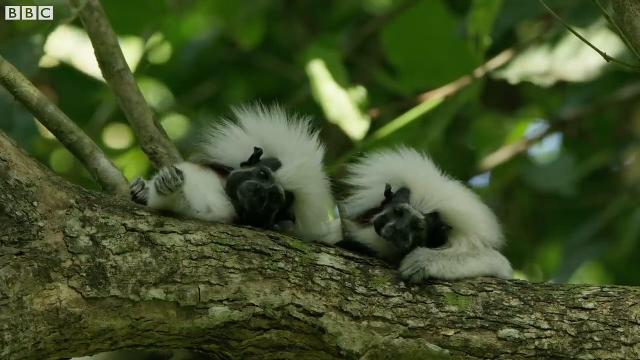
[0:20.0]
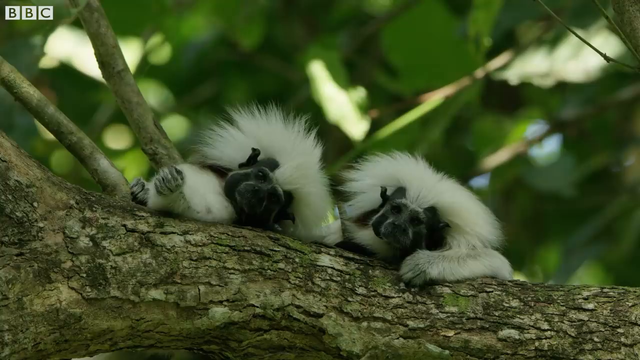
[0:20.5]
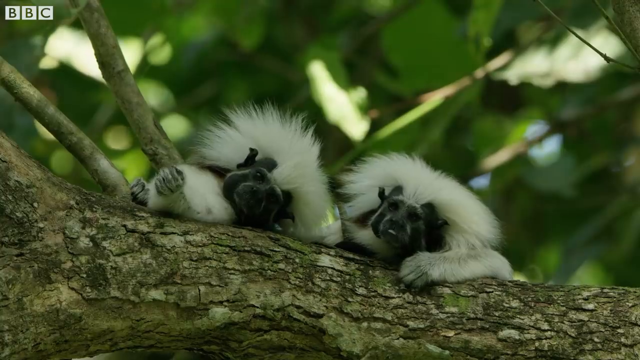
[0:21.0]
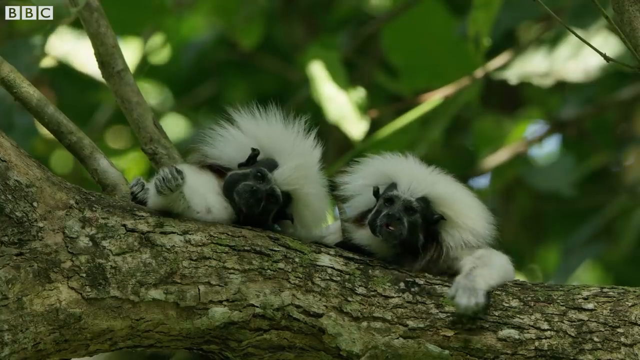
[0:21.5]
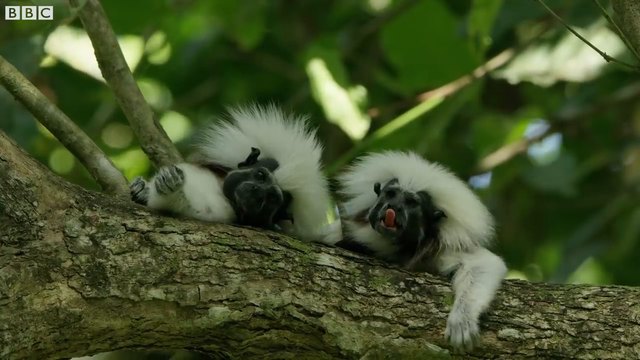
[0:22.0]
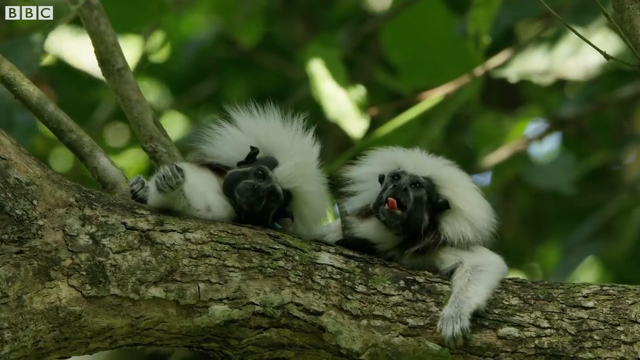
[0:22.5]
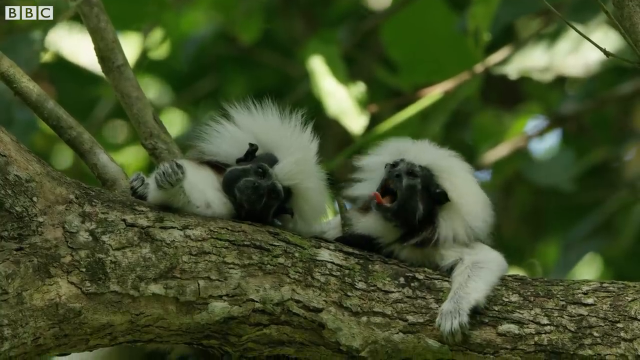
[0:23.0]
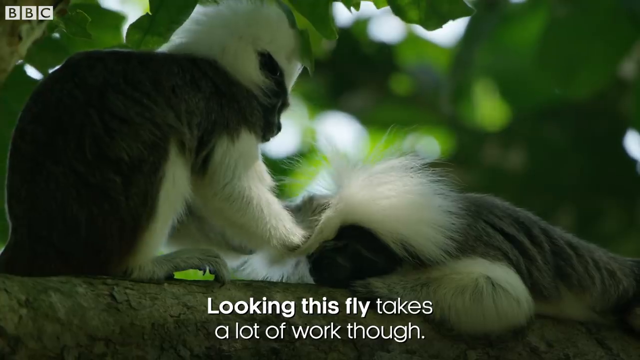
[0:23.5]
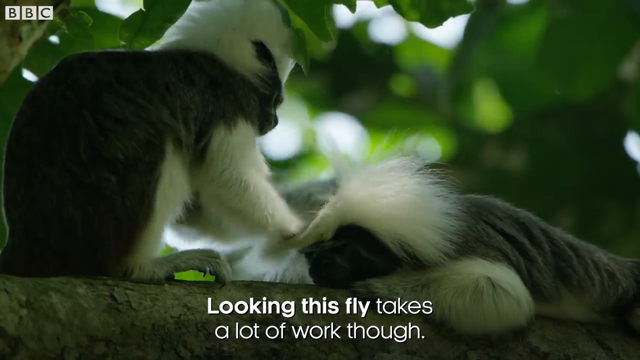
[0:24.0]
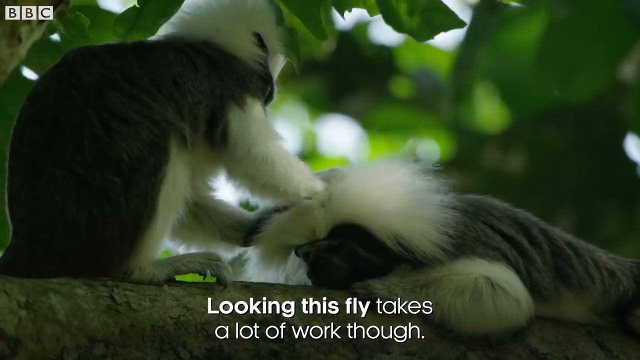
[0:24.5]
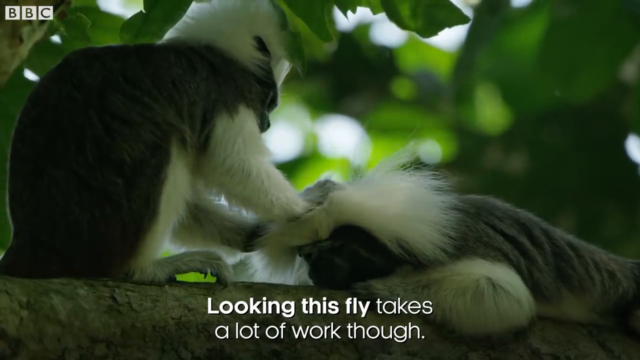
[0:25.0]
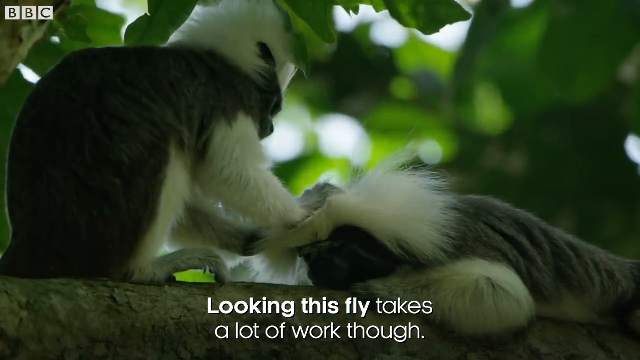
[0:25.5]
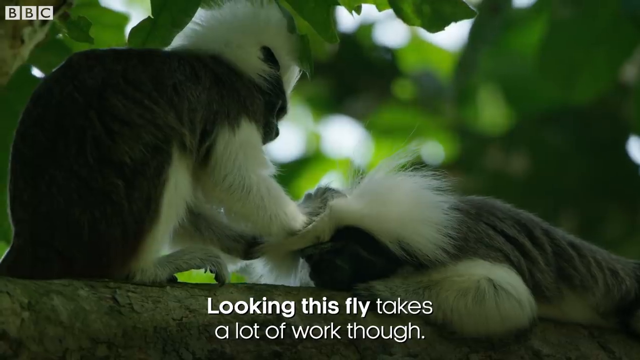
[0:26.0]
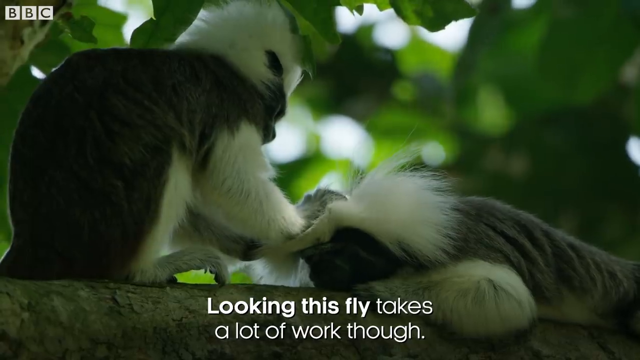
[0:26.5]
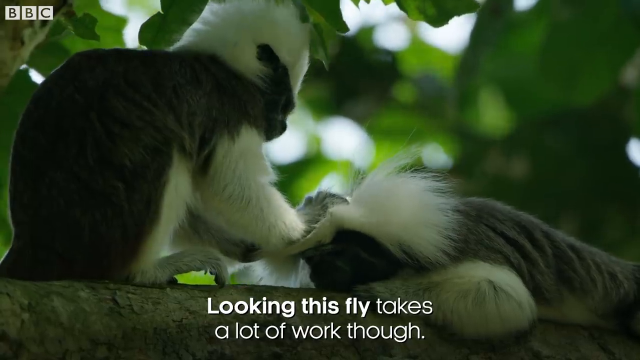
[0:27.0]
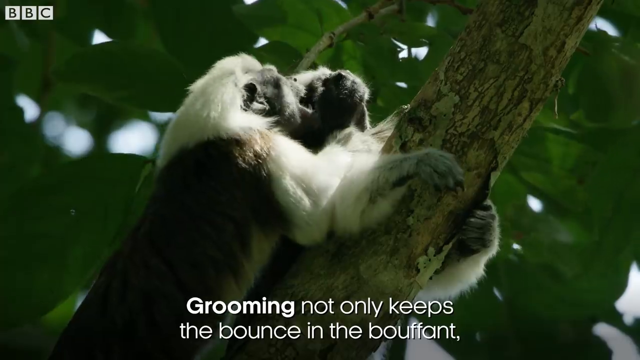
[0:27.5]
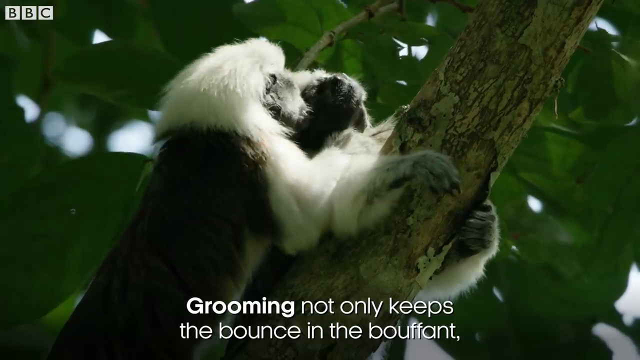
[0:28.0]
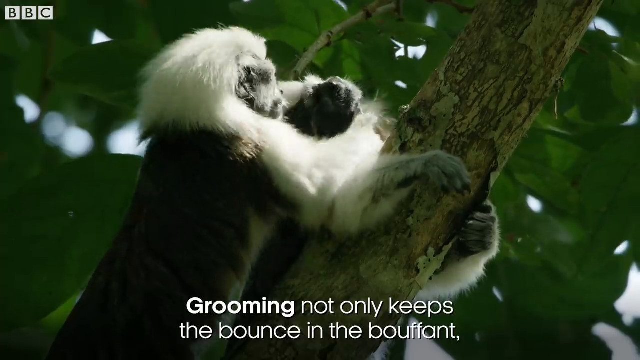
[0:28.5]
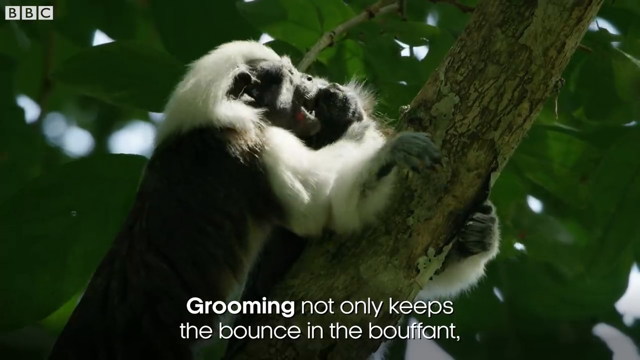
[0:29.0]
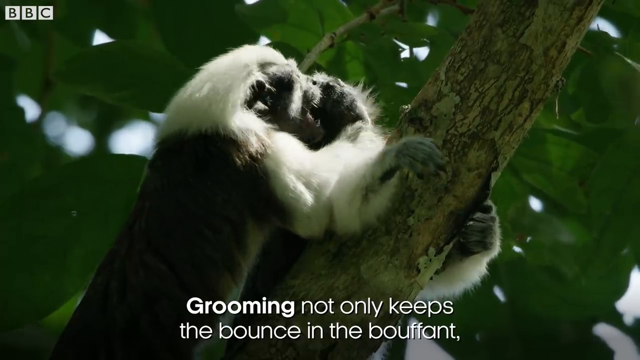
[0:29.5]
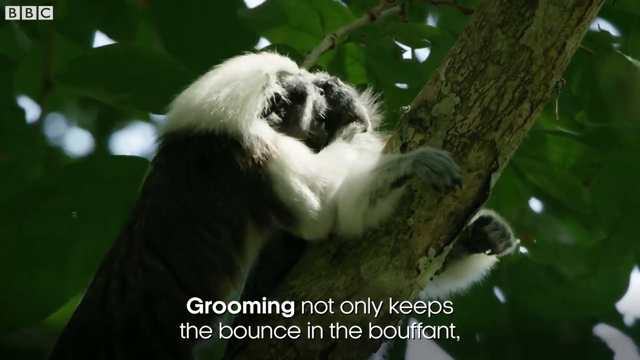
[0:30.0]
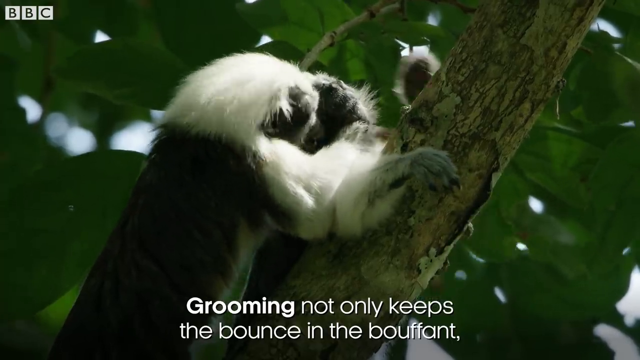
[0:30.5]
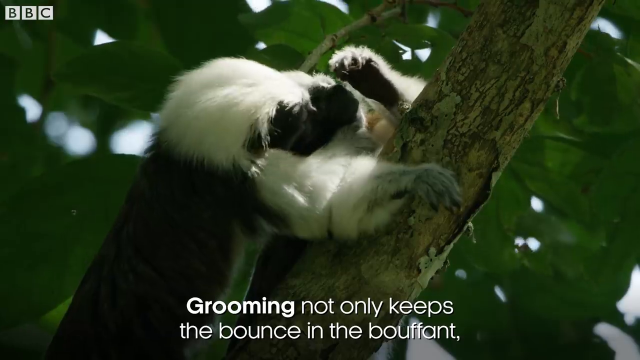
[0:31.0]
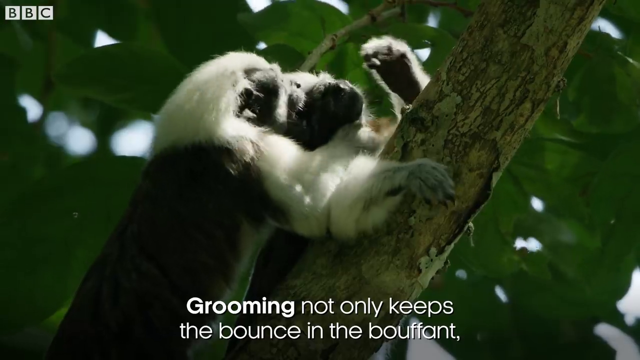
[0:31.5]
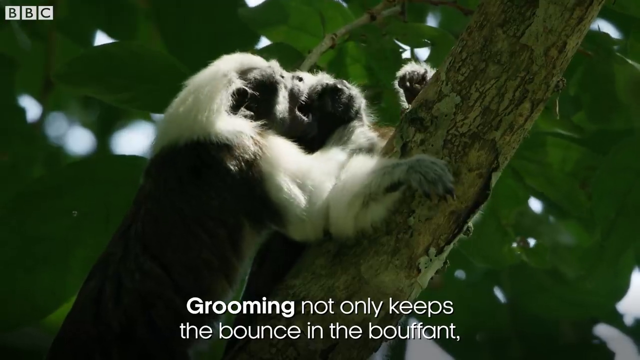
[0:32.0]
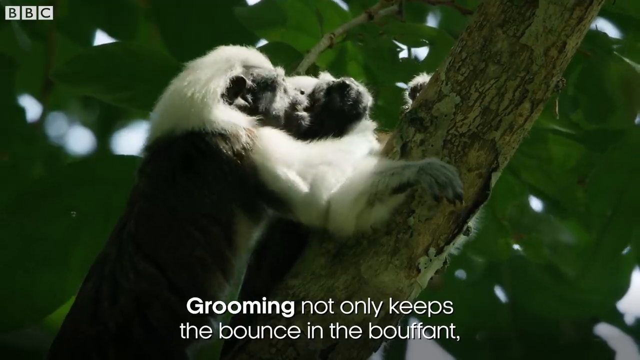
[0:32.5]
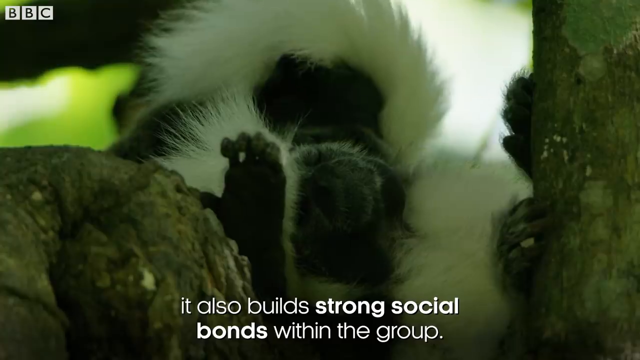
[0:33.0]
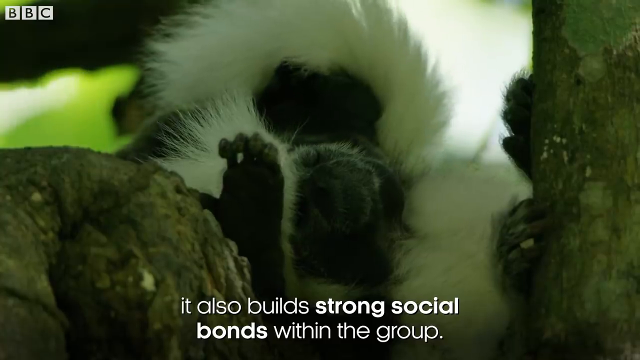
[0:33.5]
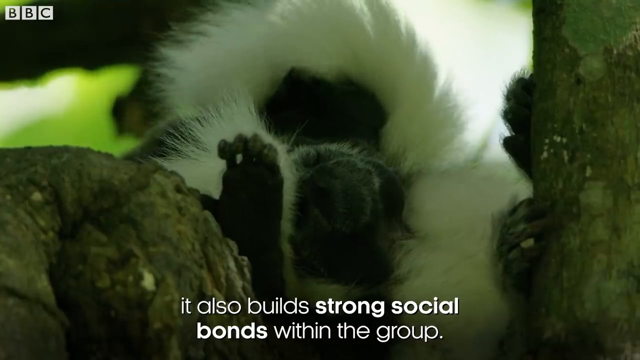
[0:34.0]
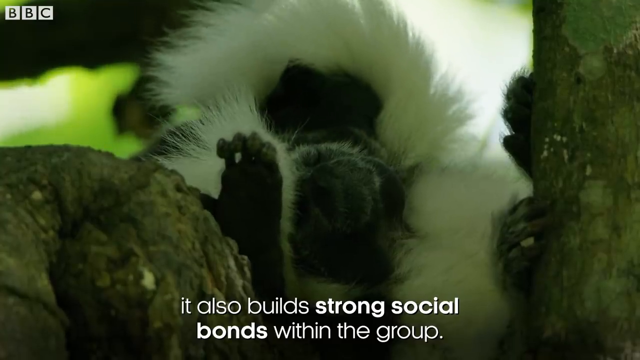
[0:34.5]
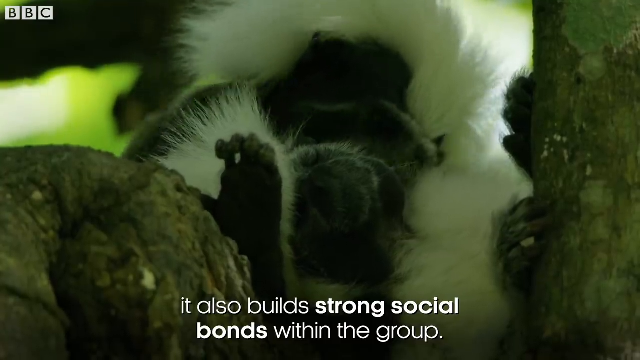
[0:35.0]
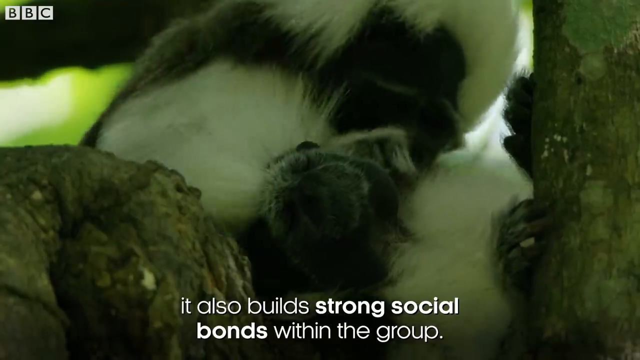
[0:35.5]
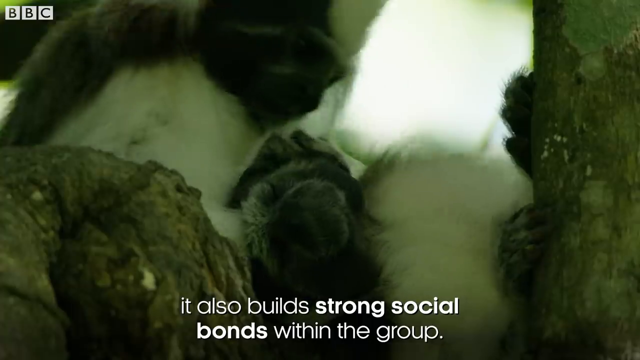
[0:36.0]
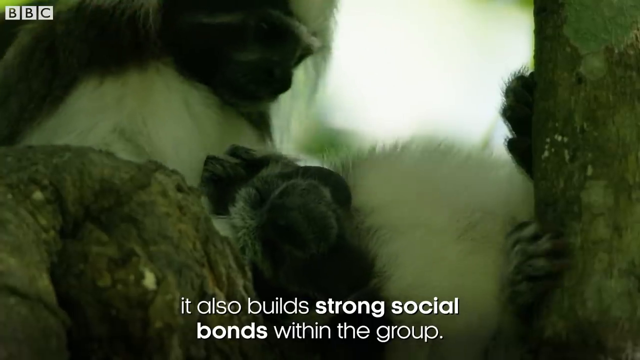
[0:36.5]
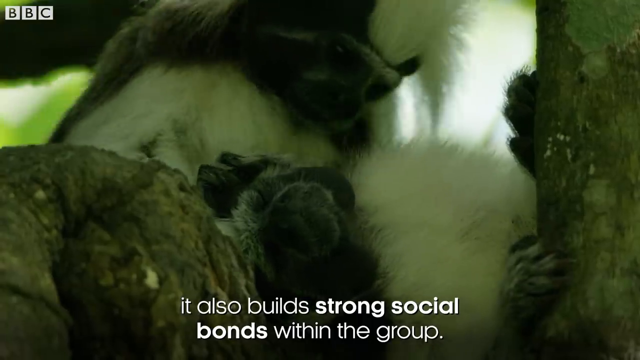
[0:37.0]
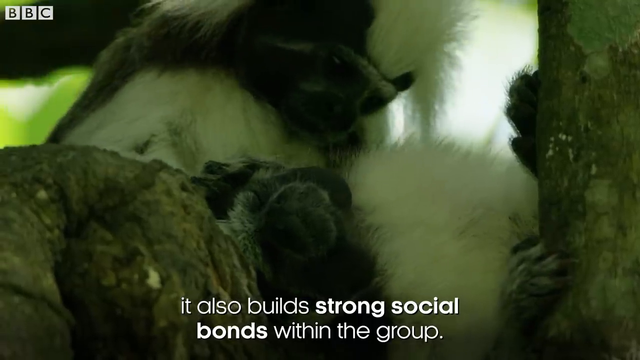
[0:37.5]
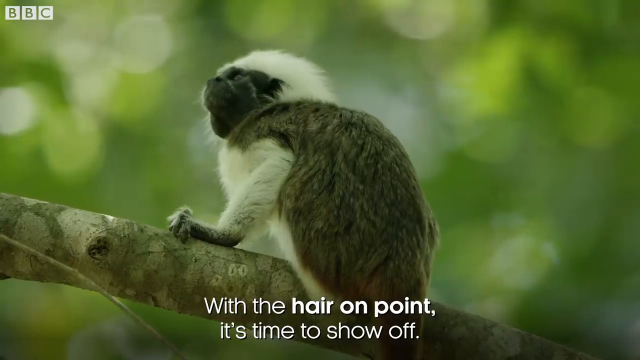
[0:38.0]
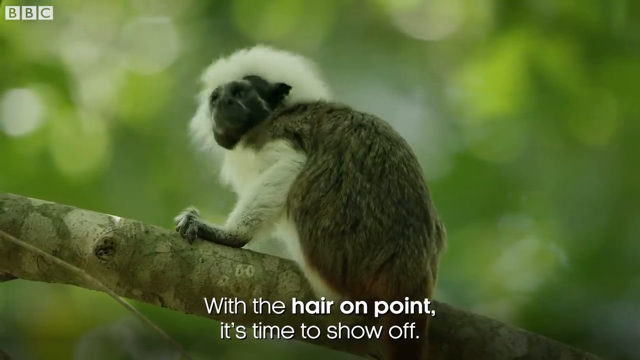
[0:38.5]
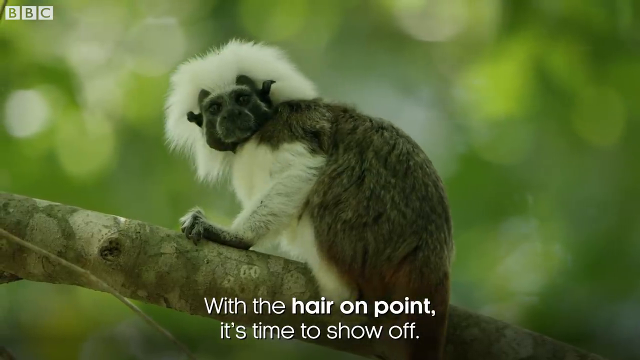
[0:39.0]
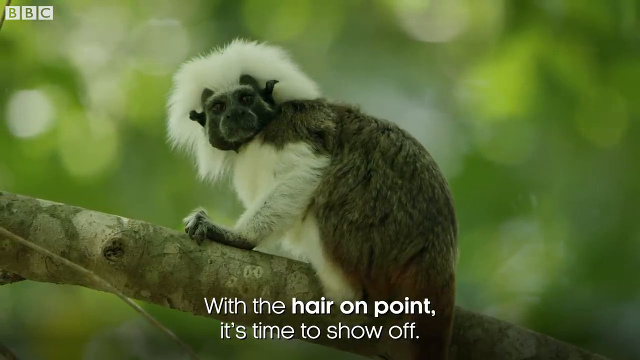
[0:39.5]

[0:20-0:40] Two tamarin monkeys are on a large tree branch with large green leafy leaves coming out of the branches. One has his pink tongue out. They touch each other and look like they are kind of biting each other, grooming each other, or just being playful. One monkey appears more docile and submissive, while the other appears to take charge of the grooming. White text at the bottom of the screen reads "With the white hair on point, it's time to show off," then "Grooming not only keeps the balance in the bouffant" and "It also builds strong social bonds within the group."